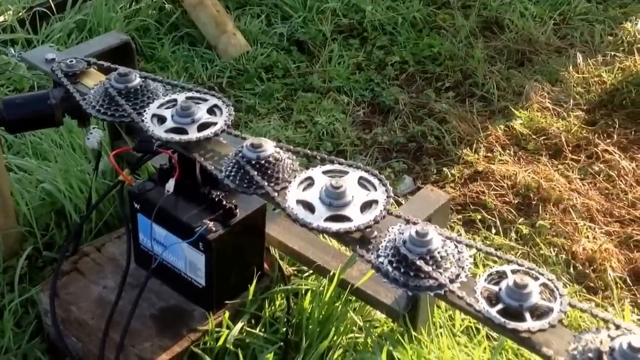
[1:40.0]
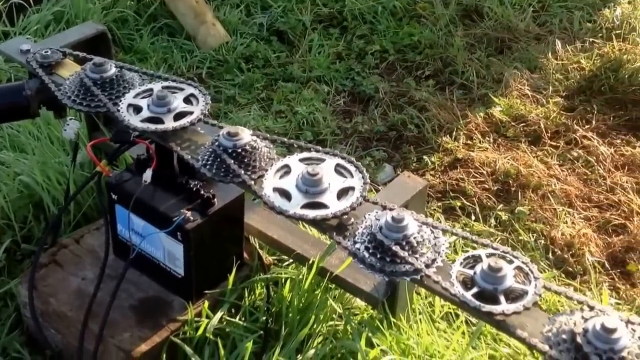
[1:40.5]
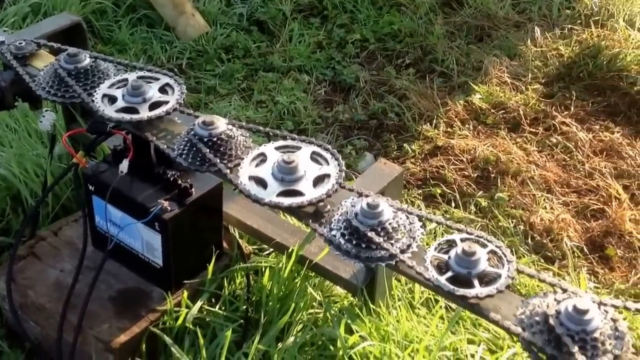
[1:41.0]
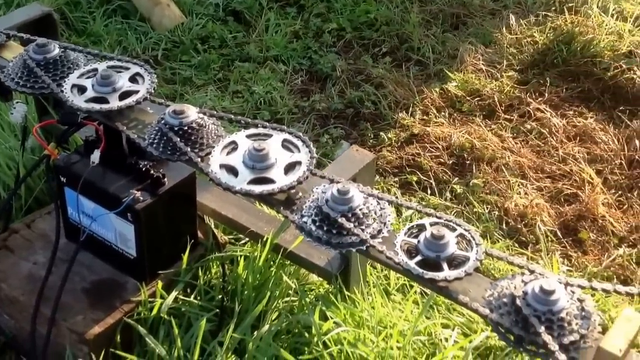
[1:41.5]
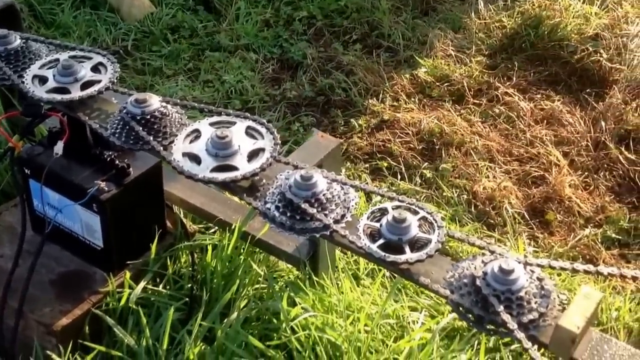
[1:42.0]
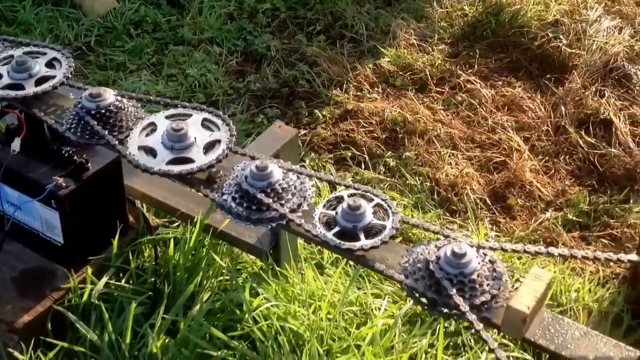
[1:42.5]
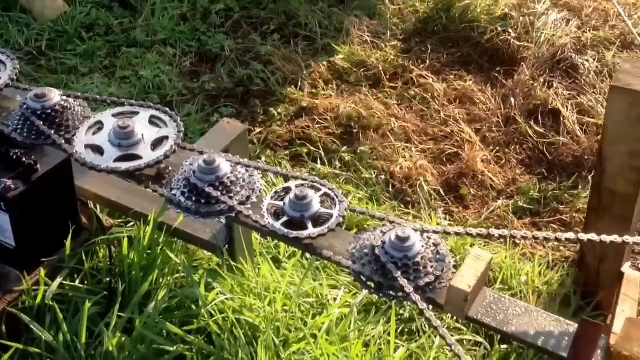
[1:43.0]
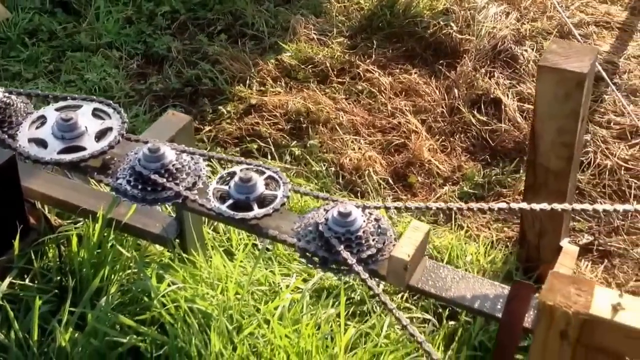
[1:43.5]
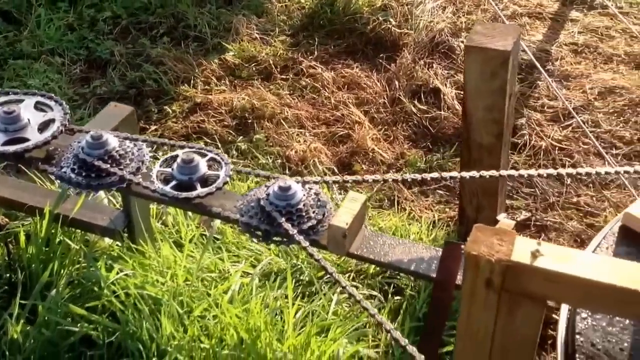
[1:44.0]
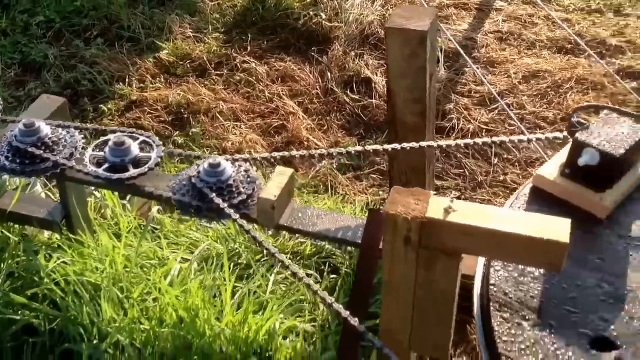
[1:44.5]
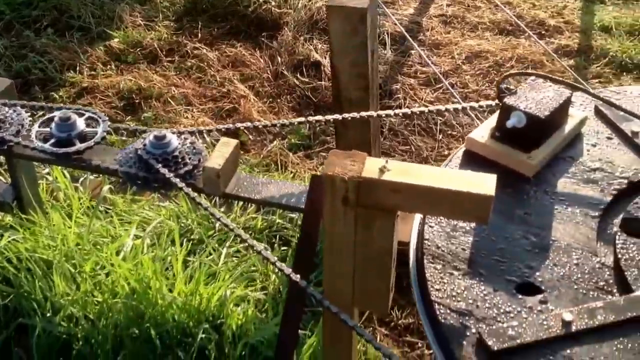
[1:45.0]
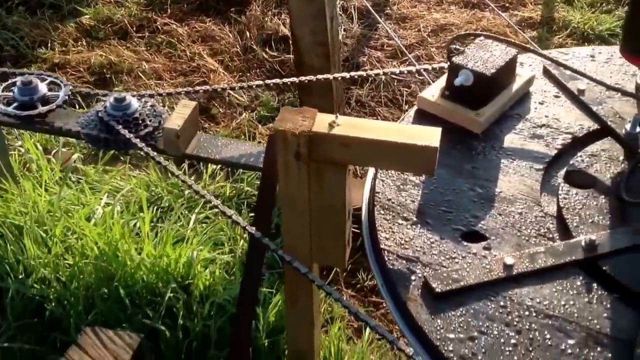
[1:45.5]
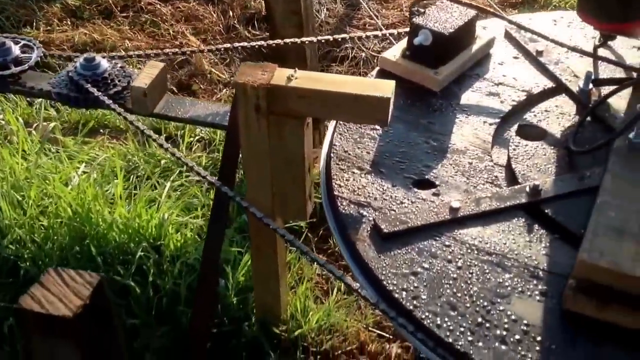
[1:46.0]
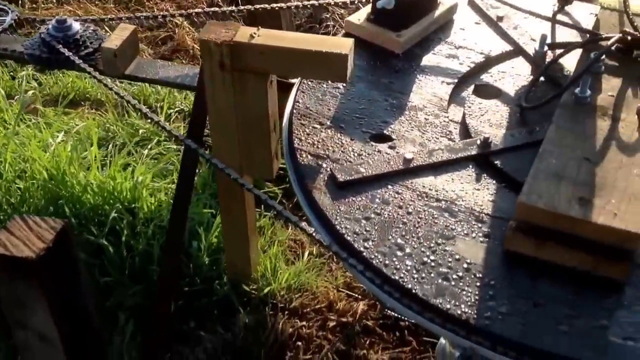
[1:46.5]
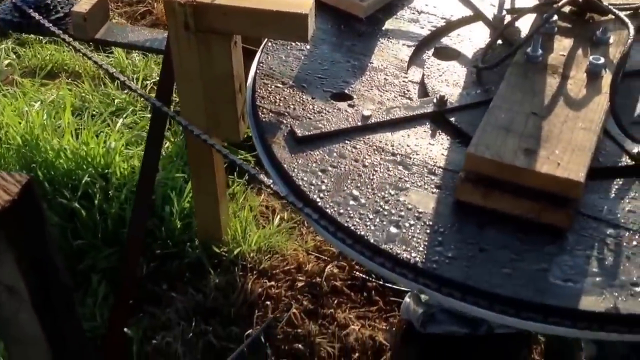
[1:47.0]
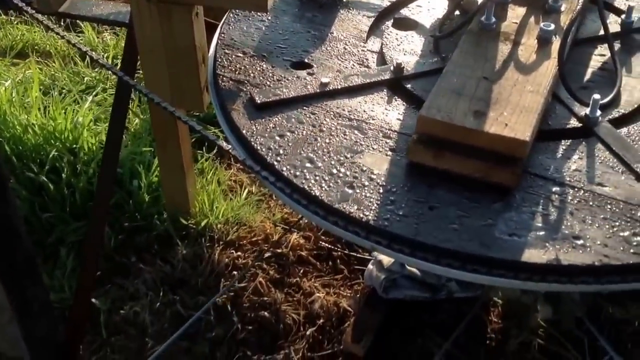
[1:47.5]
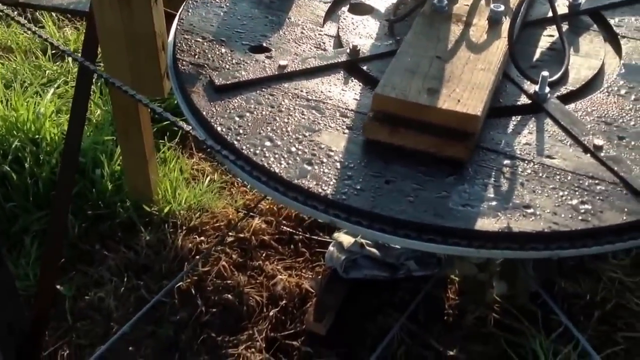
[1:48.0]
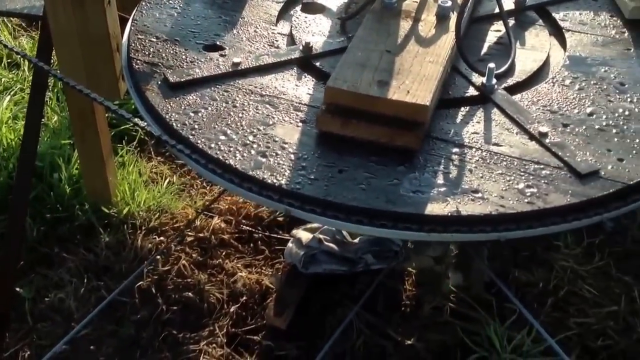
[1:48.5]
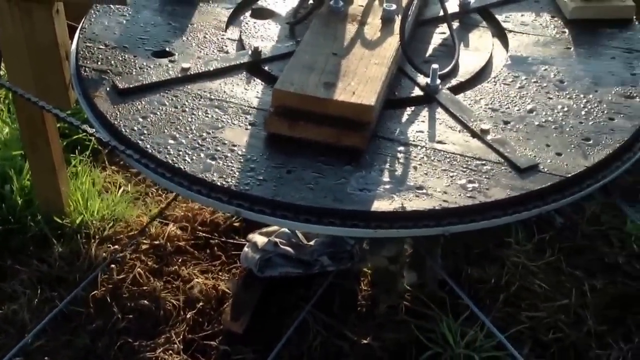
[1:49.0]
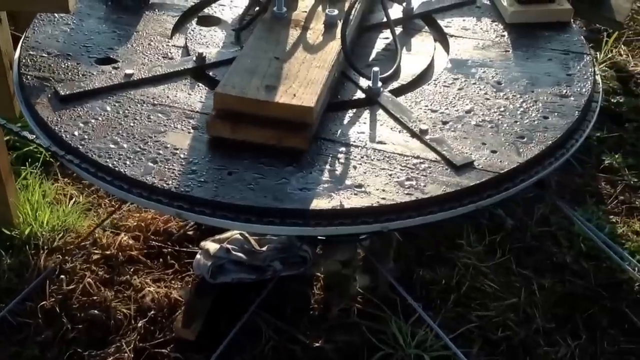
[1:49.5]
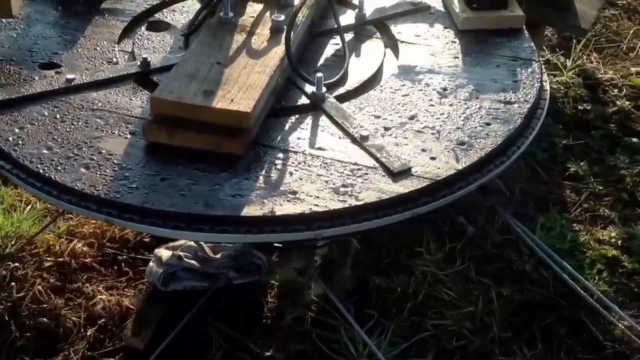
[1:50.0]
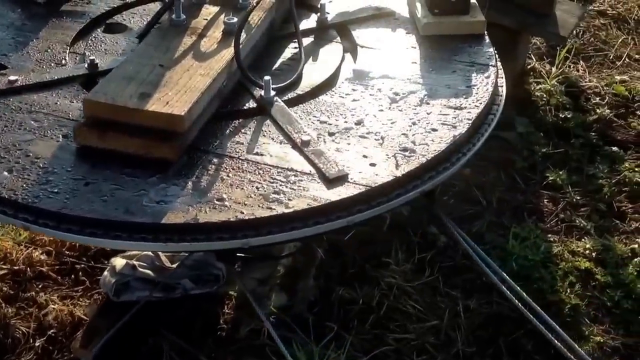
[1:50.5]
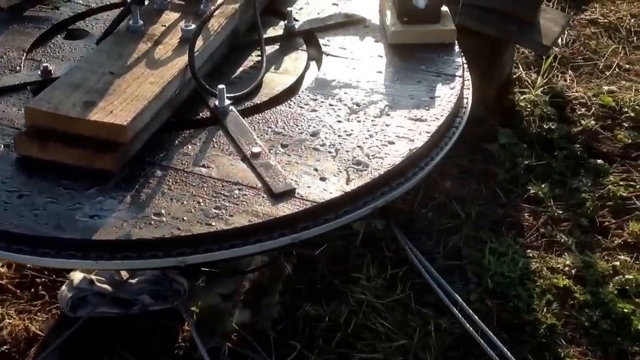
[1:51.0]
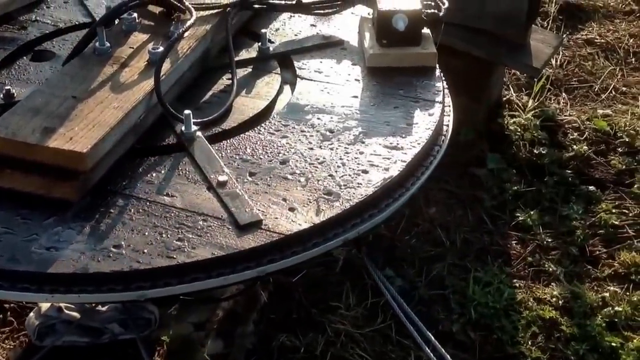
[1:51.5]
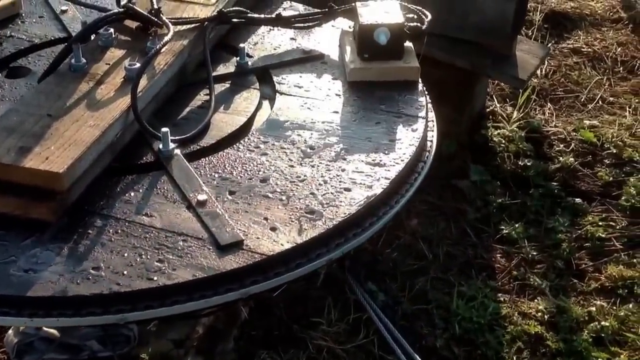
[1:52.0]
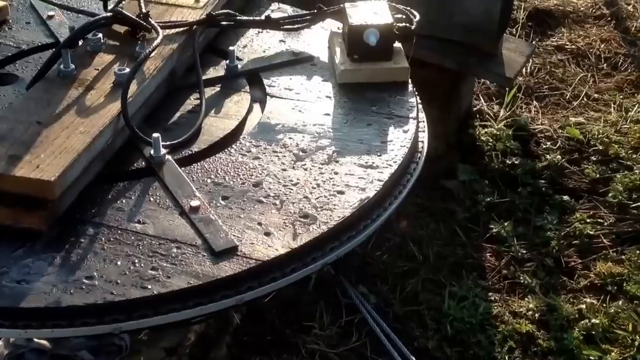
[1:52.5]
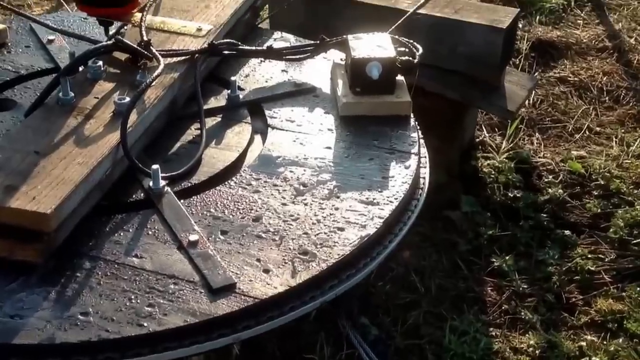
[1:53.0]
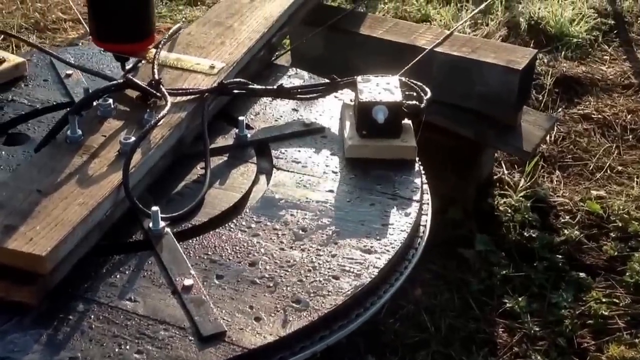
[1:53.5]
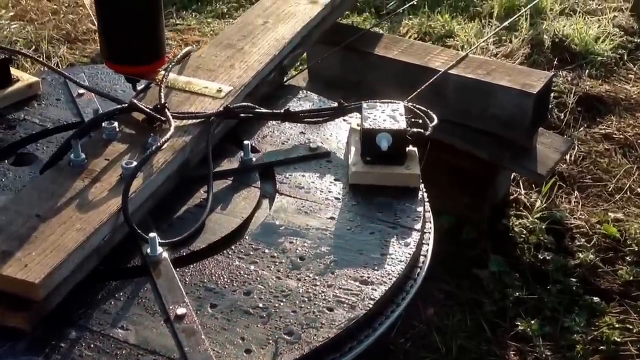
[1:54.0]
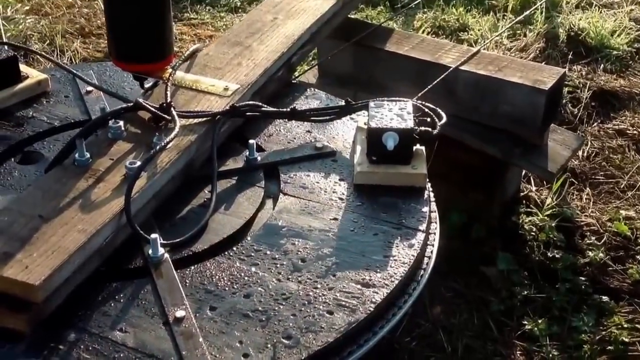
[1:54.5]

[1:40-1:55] A close-up shows a long, slim horizontal metal bar, more like a metal rod but flattened in appearance. About six or more wheels are fixed on the metal rod, and small pulley chains attached to the wheels connect one disc to the next, forming some sort of pulley system. The final disc on the right has a long metal chain connecting a large, black, flat circular disc to the smaller discs on the metal rod. In the background is the ground, with green grass on one side and dried-out brown grass on the other. The camera pans to a very large, flat, separate disc that also has a pulley chain around it, moves to the right across the disc, and stays on it for a while.